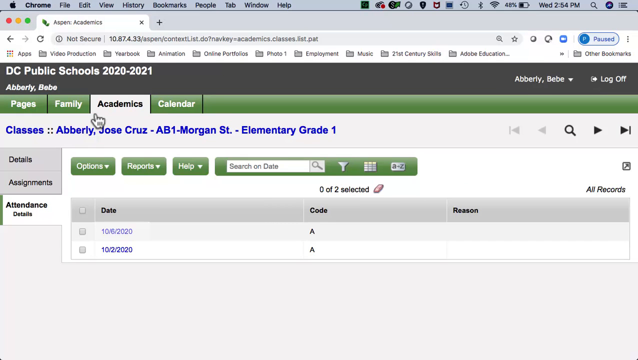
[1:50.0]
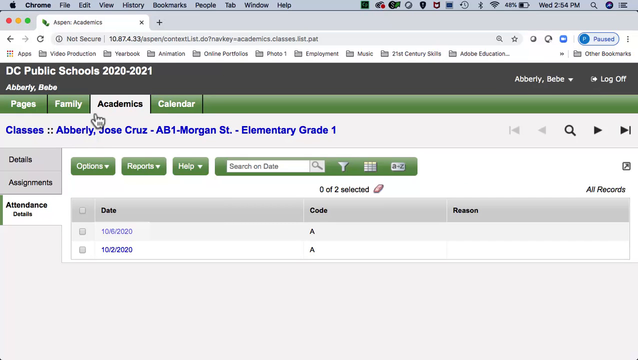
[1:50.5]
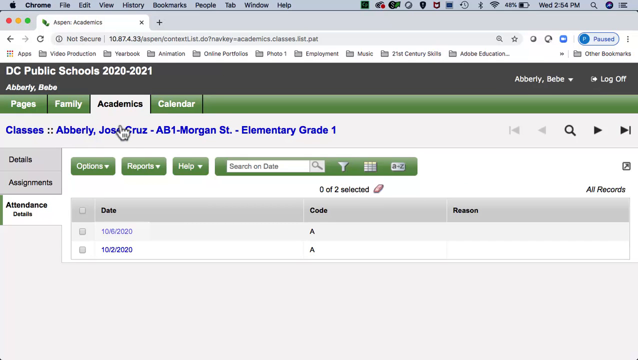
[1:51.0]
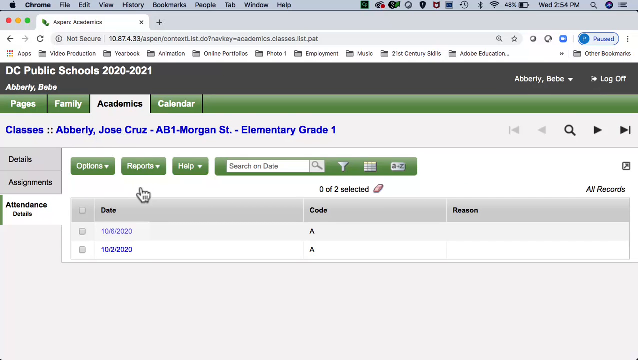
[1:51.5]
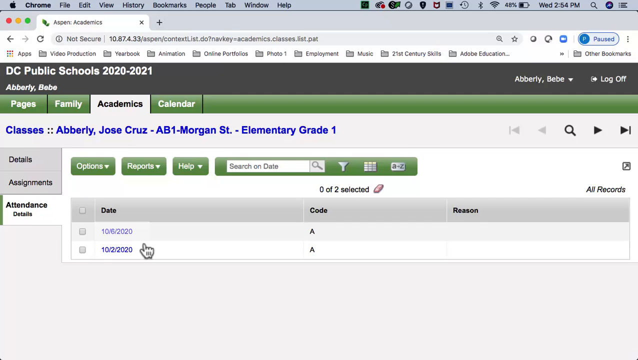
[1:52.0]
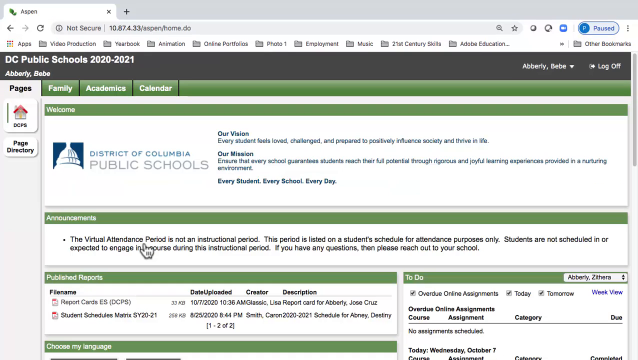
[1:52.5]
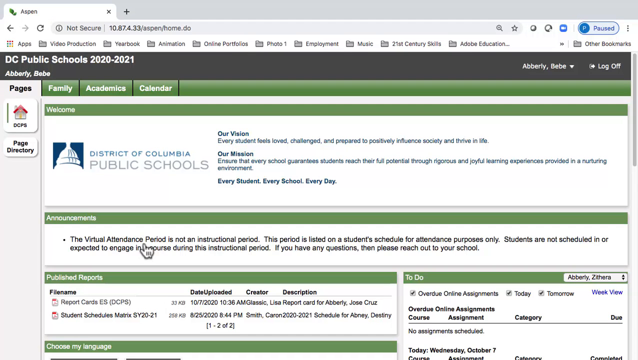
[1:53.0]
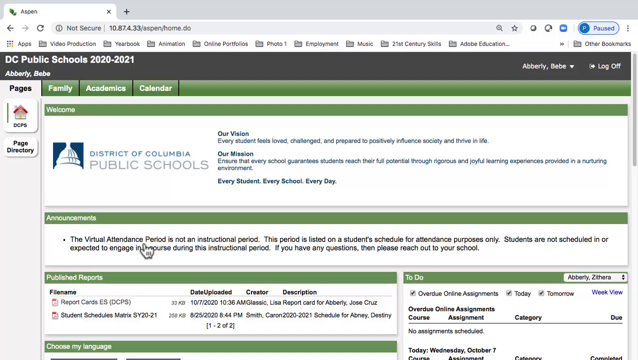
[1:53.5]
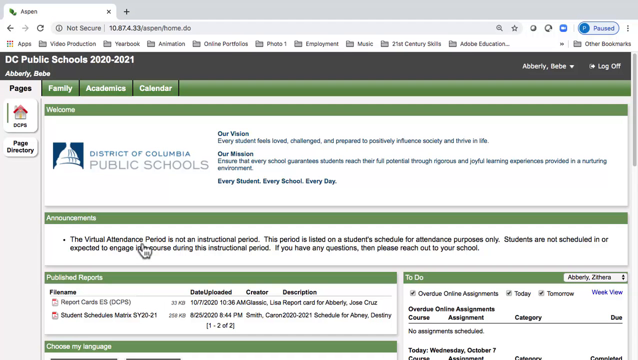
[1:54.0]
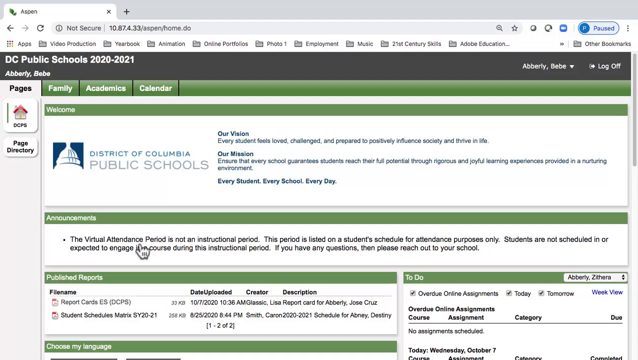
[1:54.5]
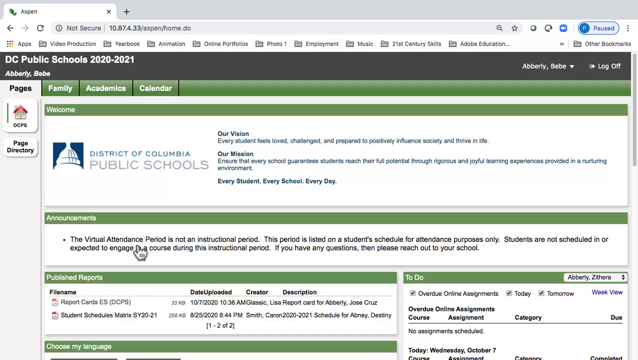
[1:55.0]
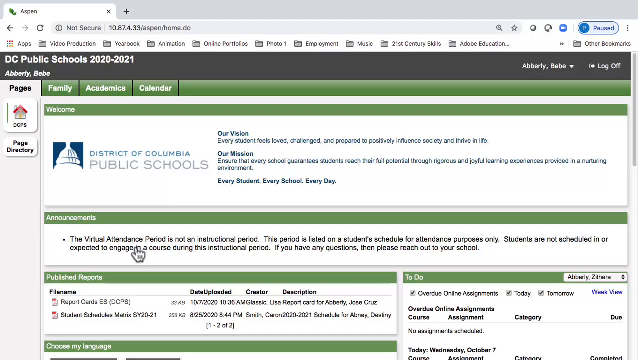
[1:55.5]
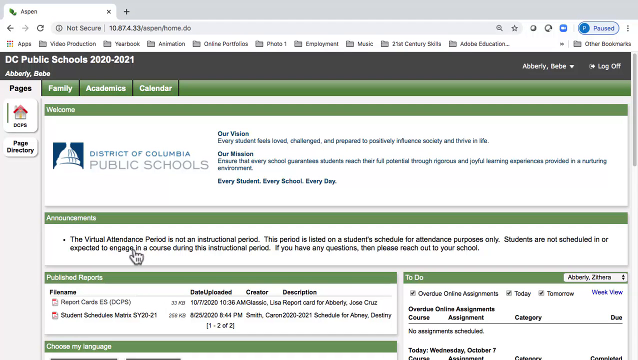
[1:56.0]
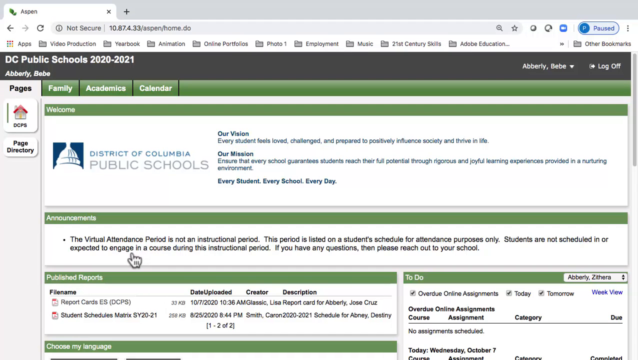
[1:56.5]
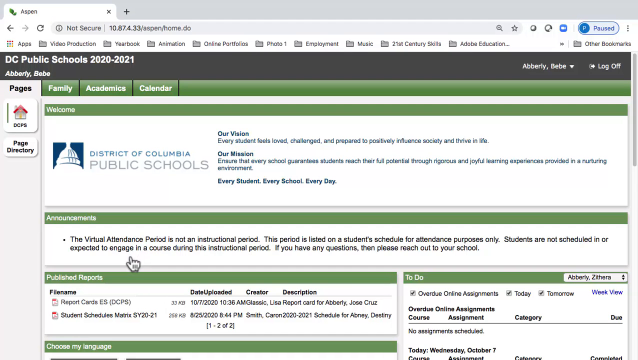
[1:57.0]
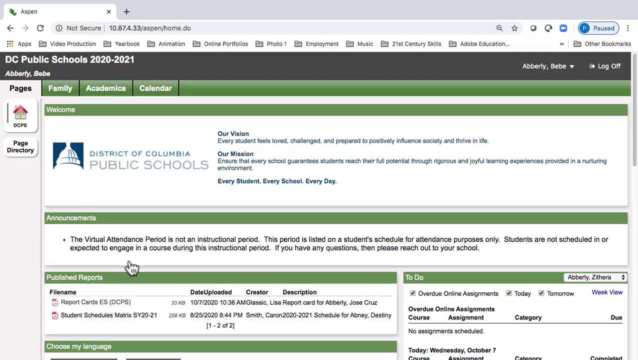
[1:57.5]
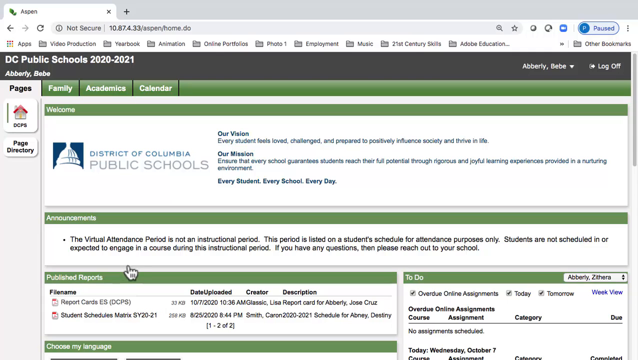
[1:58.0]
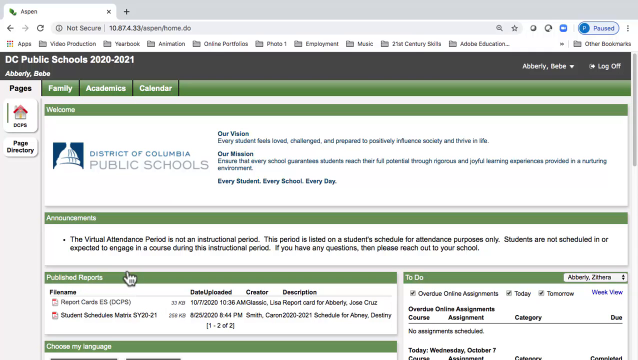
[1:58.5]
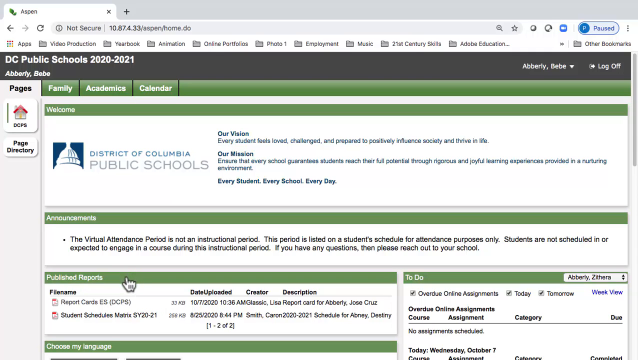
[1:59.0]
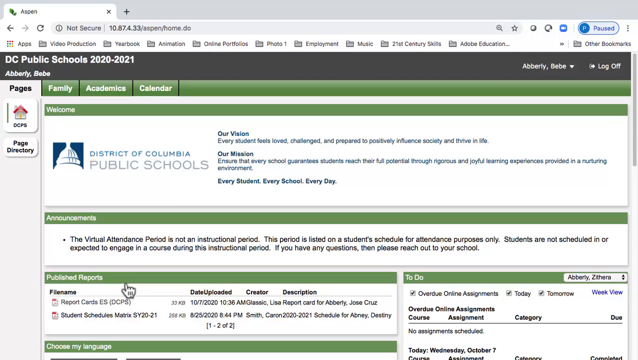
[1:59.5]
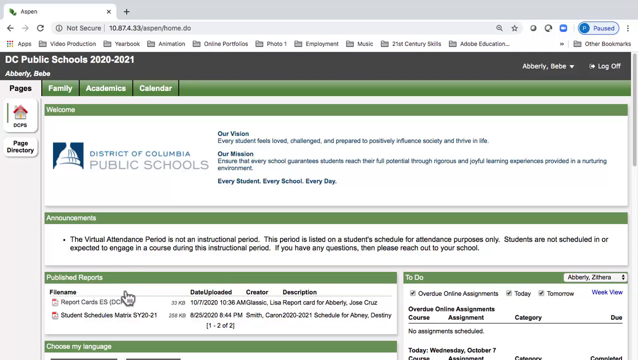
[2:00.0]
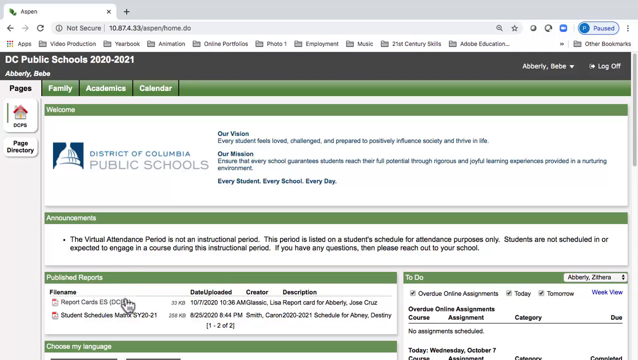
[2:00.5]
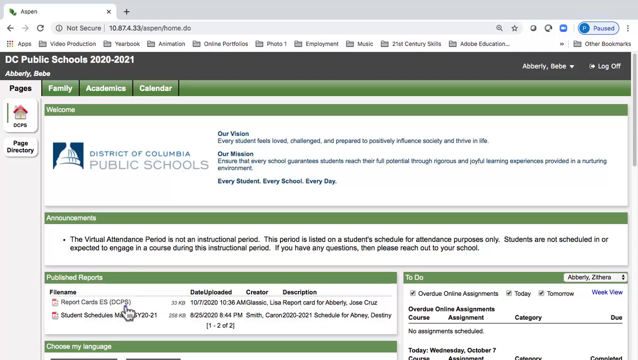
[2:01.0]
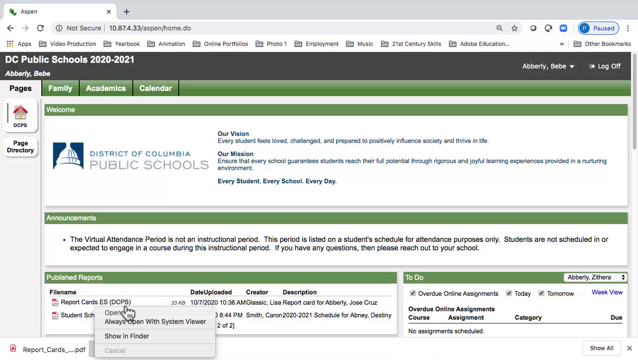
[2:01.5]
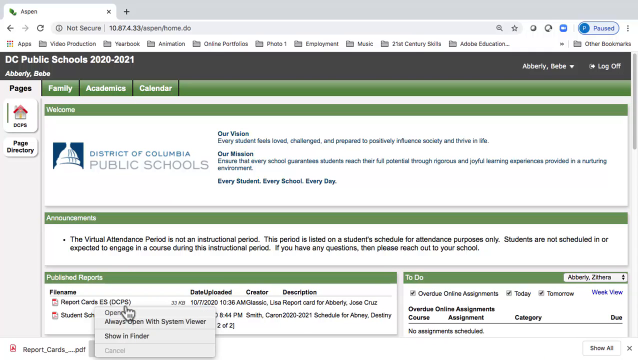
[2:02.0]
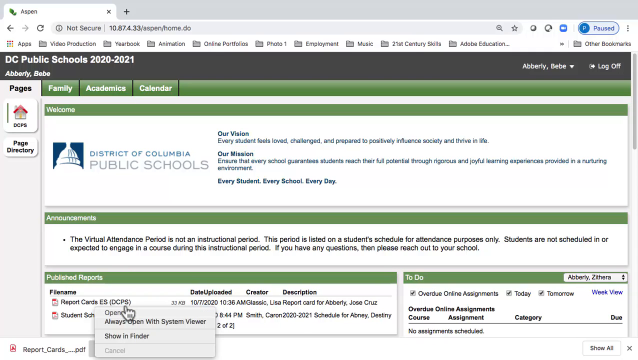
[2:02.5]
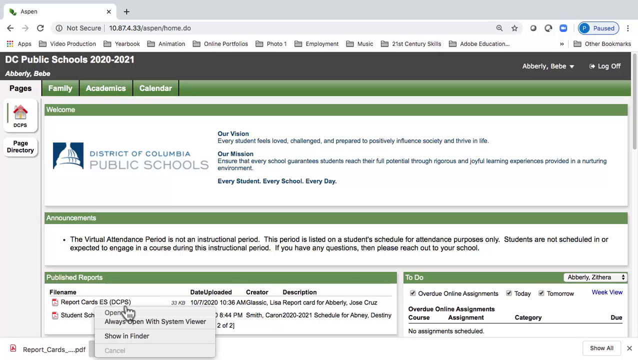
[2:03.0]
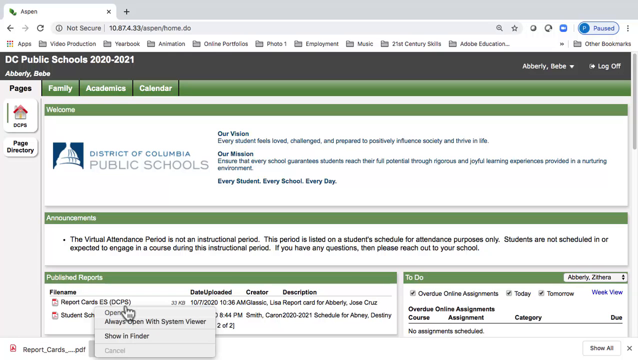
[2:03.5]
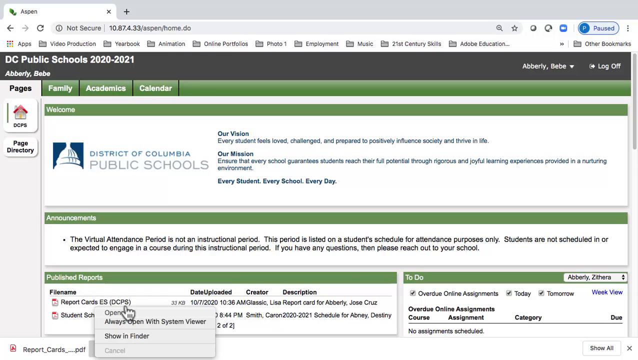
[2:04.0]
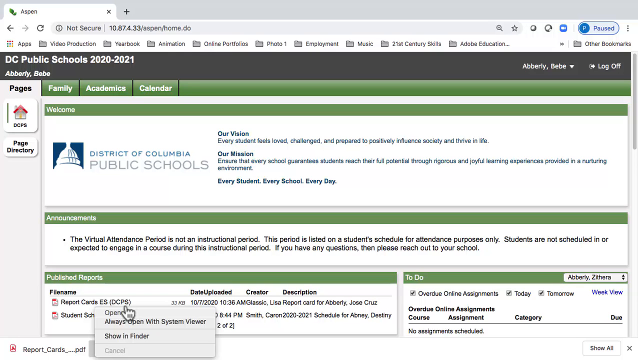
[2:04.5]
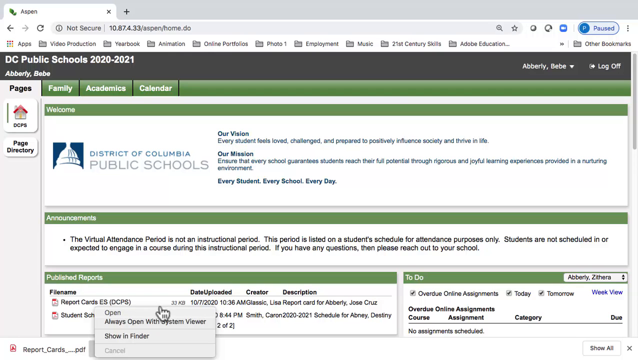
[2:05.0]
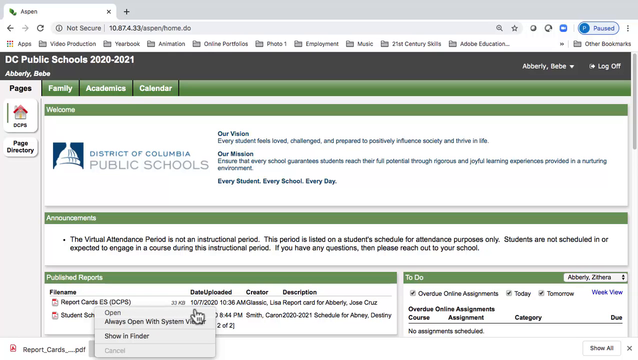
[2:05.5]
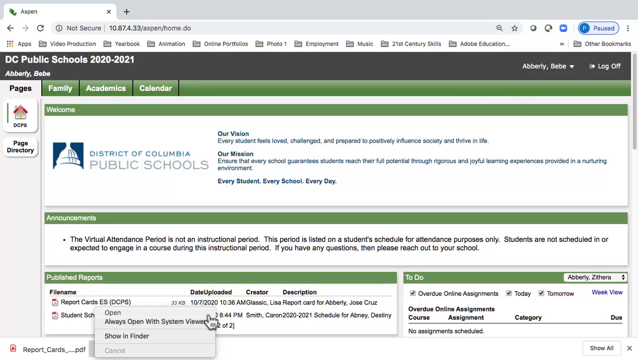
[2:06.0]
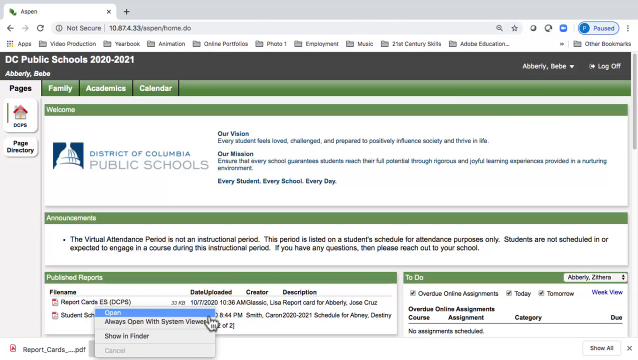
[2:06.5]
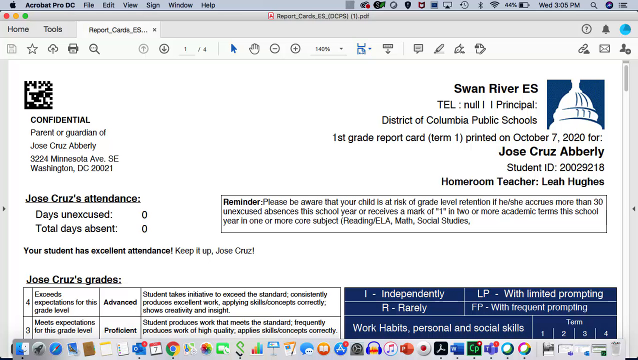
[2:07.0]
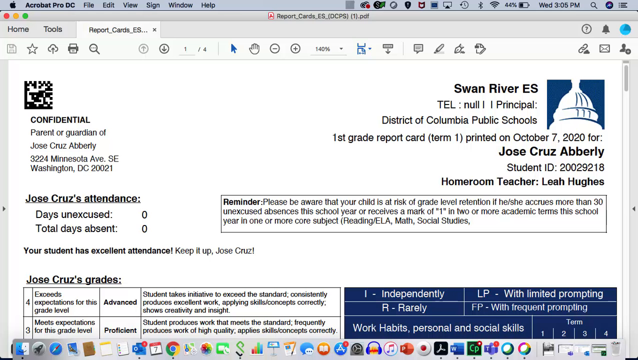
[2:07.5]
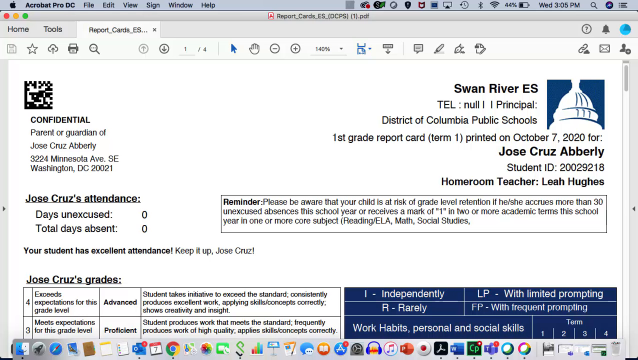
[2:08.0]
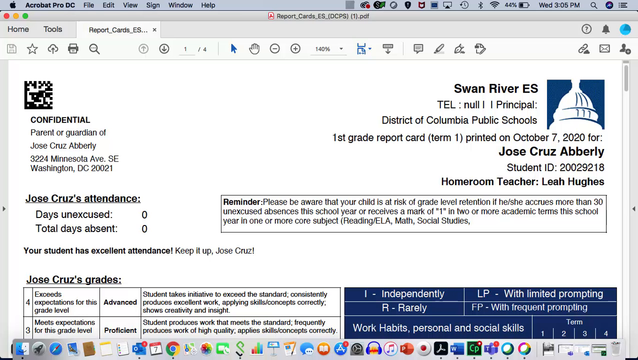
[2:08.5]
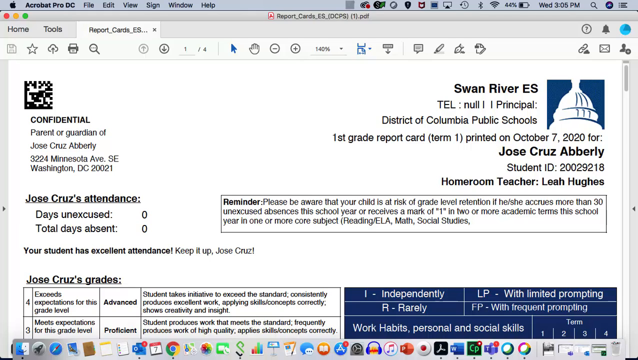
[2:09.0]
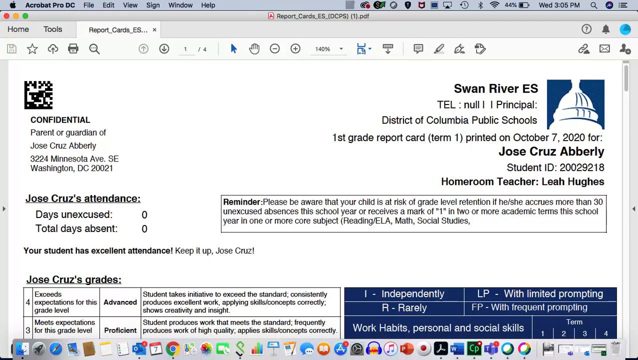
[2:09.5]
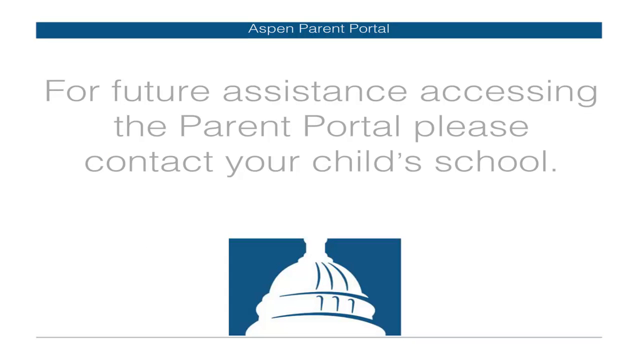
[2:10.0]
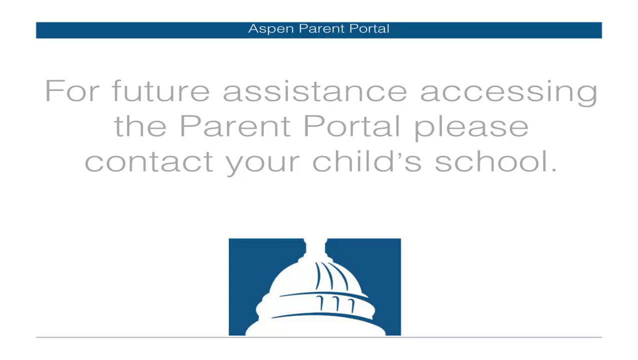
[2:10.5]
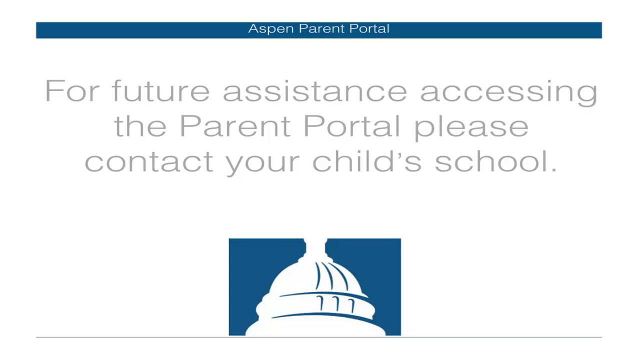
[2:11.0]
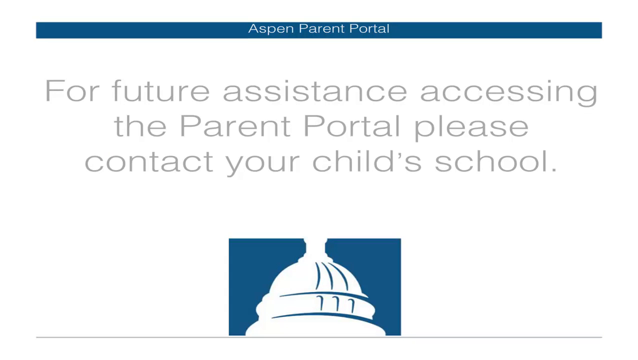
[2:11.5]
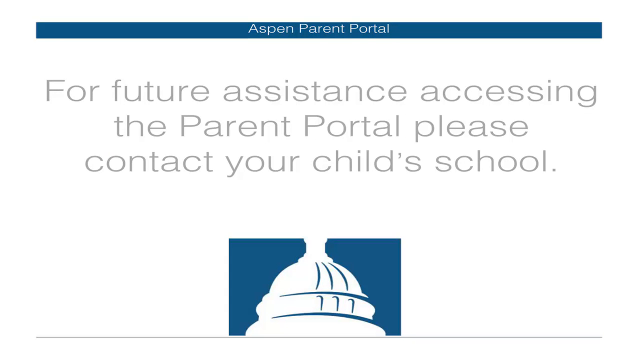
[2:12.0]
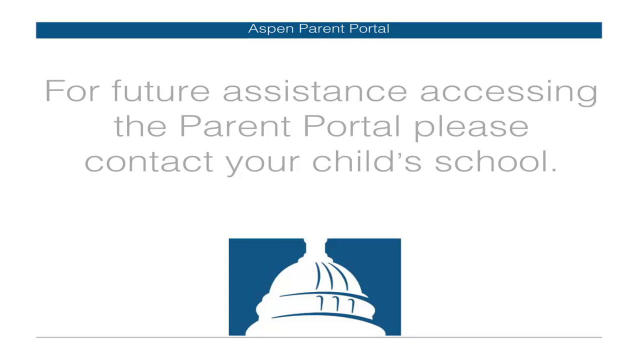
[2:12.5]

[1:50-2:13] The academics tab for Jose Cruz Aberle shows AB1 Morgan Street Elementary, grade one. This section has three columns: date, code, and reason, with two clickable entries, 10-6-2020 and 10-2-2020, both with code A. The page then returns to the welcome screen with the welcome, announcements, and published reports sections. The mouse starts on the announcements section and slowly moves down to the report cards, where it clicks Jose Cruz Aberle's grades. This page has a lot of information: on the right is a small logo for the school, Swan River ES, its telephone number, and the principal, along with "District of Columbia Public Schools," first grade report card, term one, and the printed date, October 7, 2020. It also shows student information, including Jose Cruz Aberle's name, his student ID number, and homeroom teacher, plus a small reminder saying "please be aware of the risks." On the left is a confidential section with a little information, and below that are Jose Cruz's grades, though not much of the grades is shown. The page then moves to text reading "for future assistance accessing the parent portal, please contact your child's school," with only the school's logo.